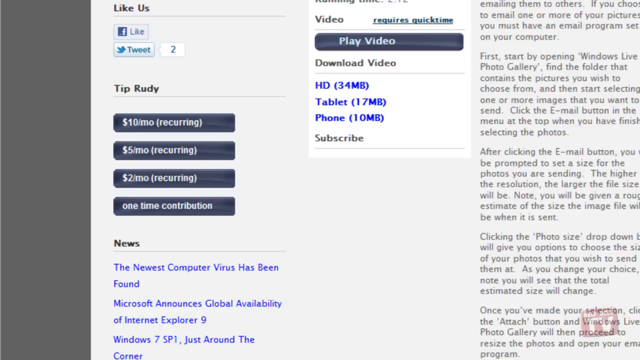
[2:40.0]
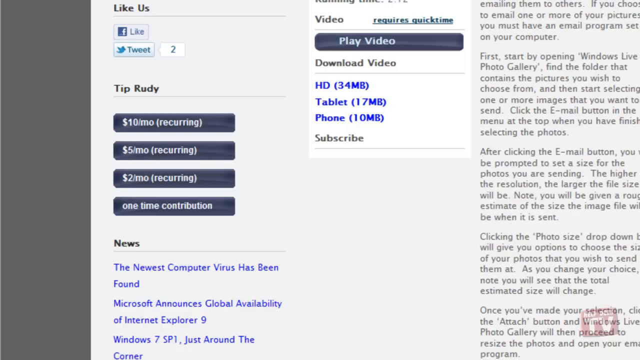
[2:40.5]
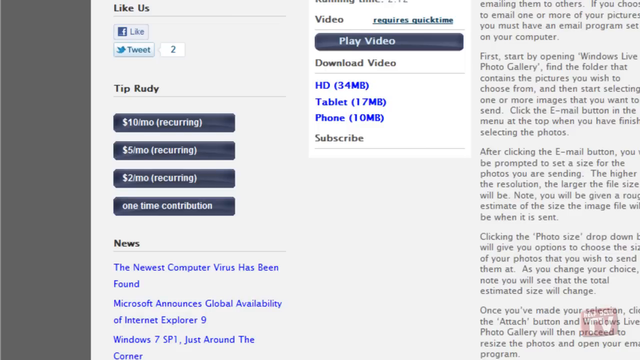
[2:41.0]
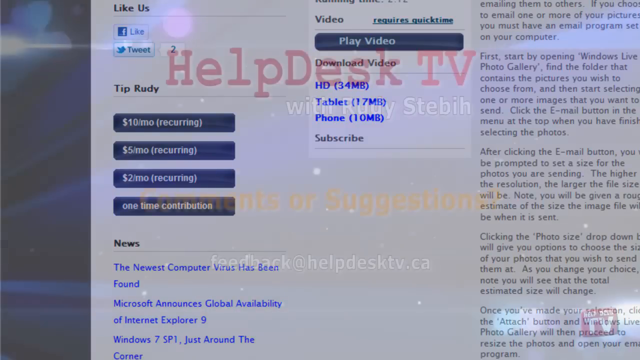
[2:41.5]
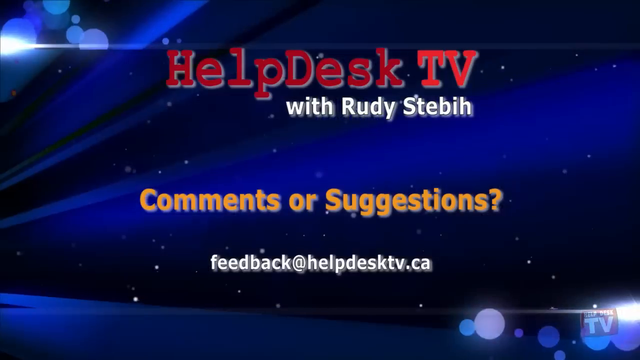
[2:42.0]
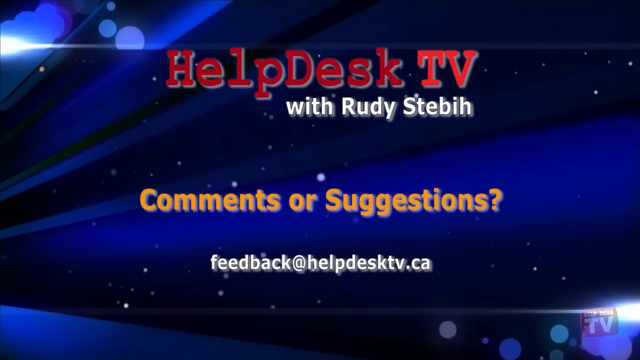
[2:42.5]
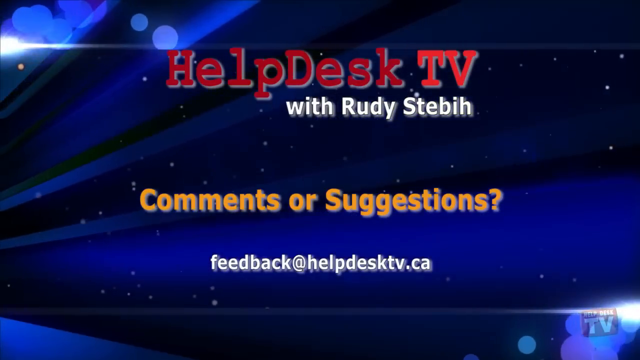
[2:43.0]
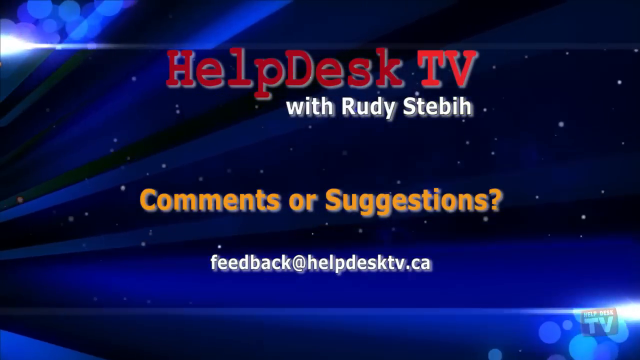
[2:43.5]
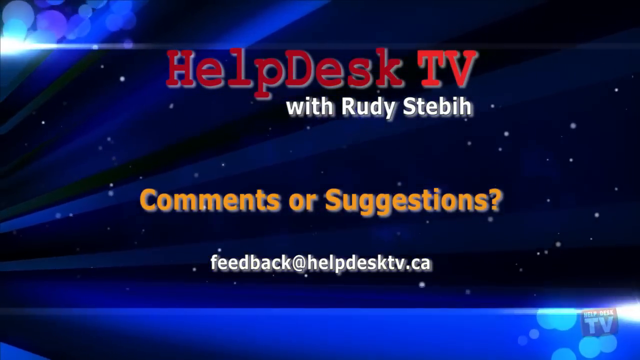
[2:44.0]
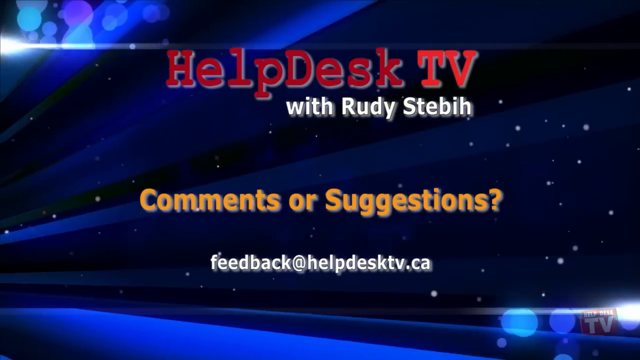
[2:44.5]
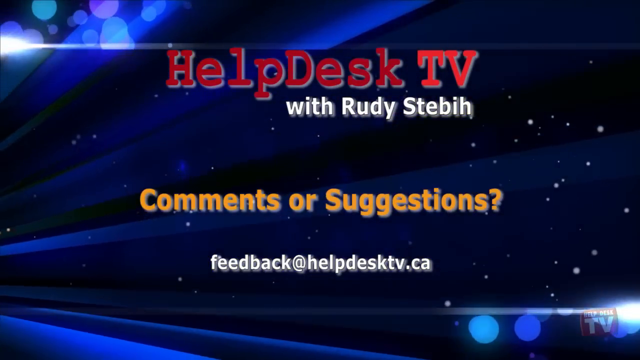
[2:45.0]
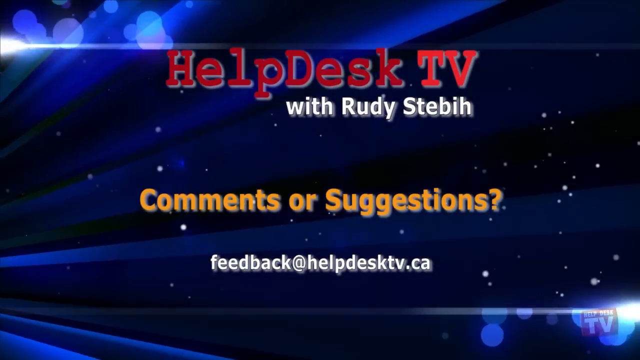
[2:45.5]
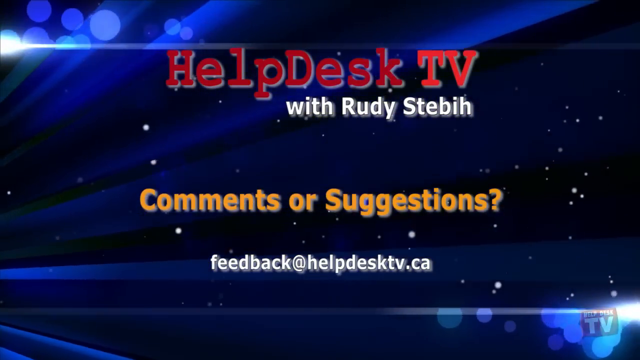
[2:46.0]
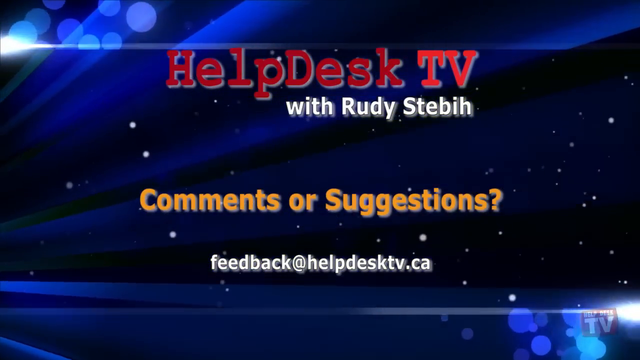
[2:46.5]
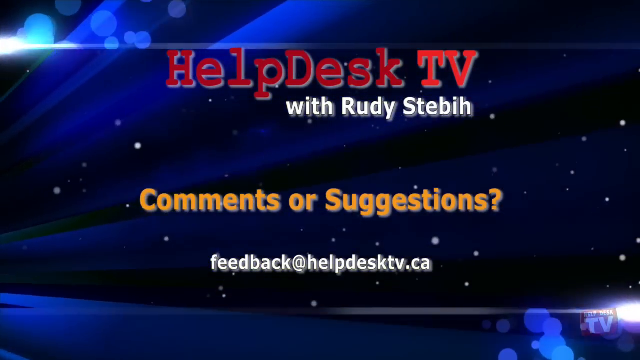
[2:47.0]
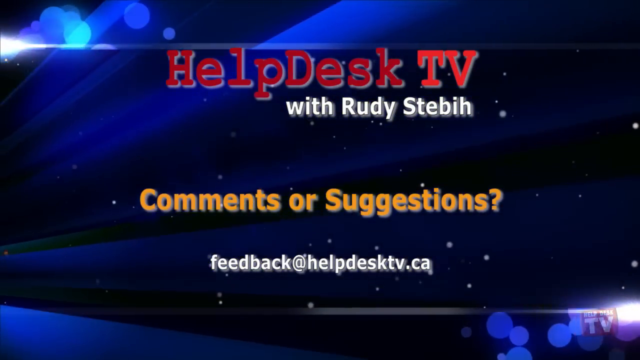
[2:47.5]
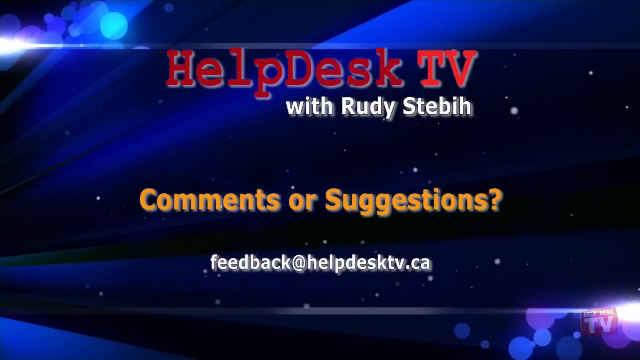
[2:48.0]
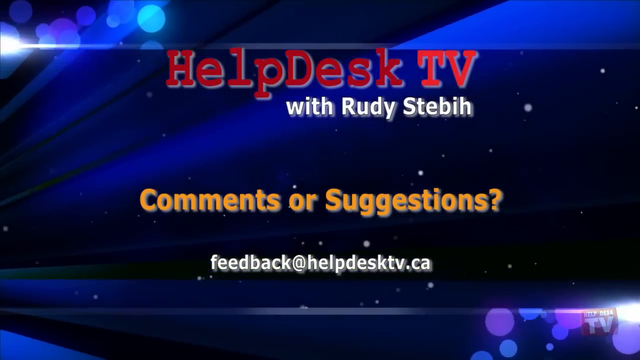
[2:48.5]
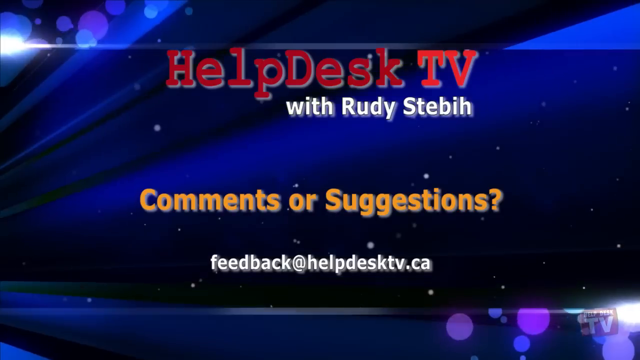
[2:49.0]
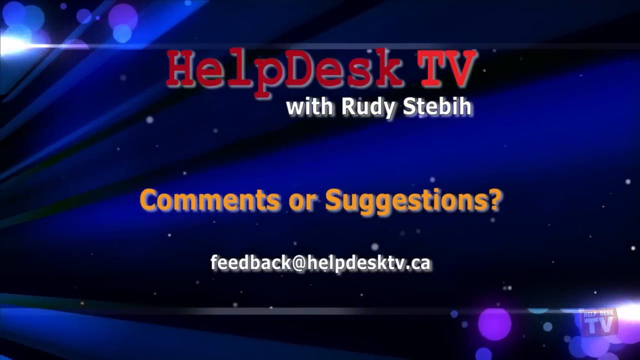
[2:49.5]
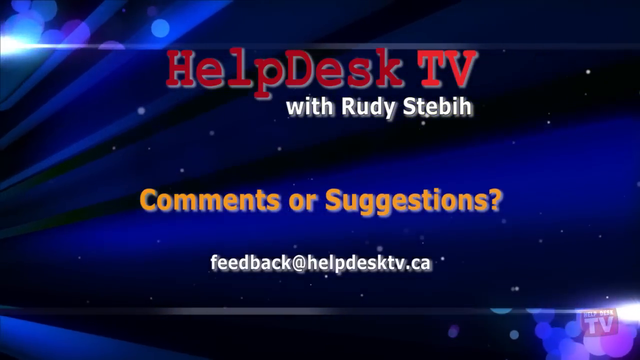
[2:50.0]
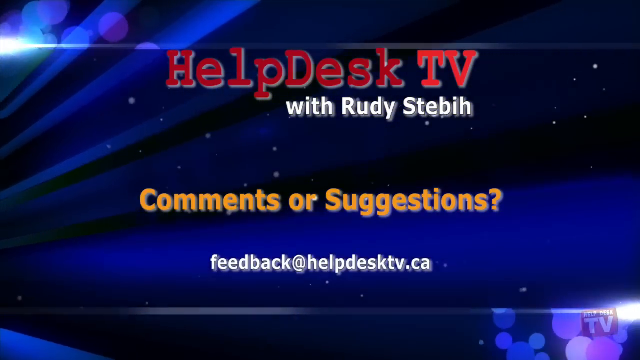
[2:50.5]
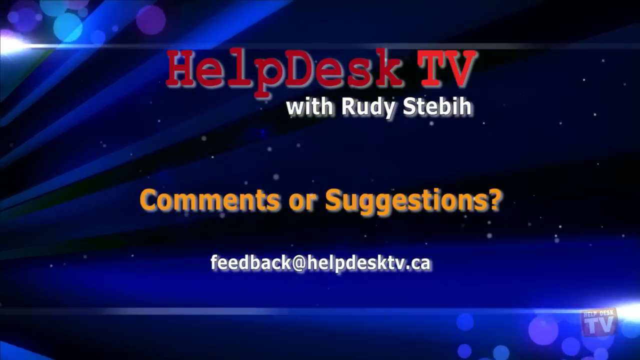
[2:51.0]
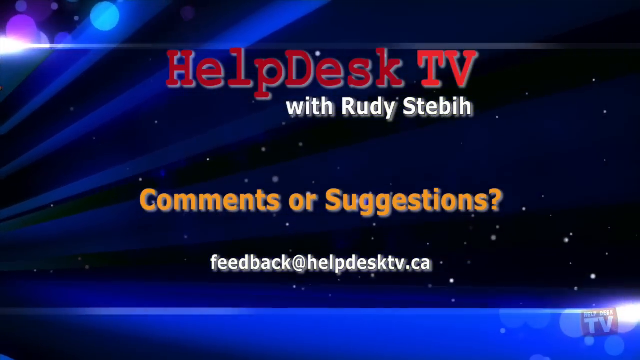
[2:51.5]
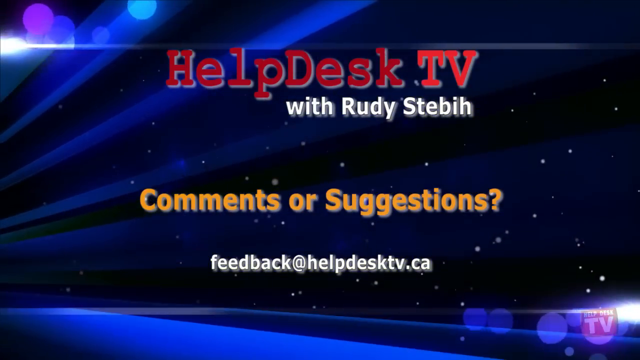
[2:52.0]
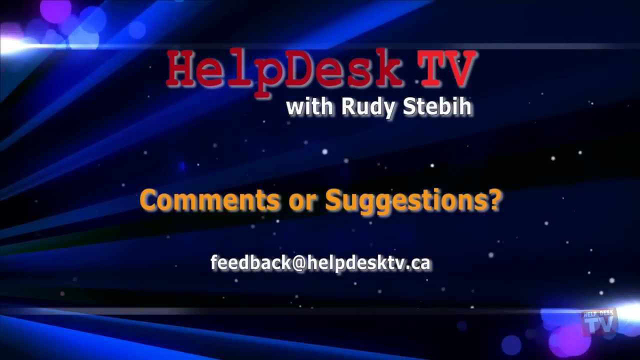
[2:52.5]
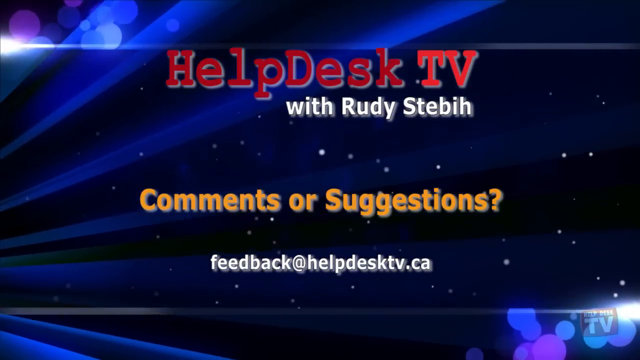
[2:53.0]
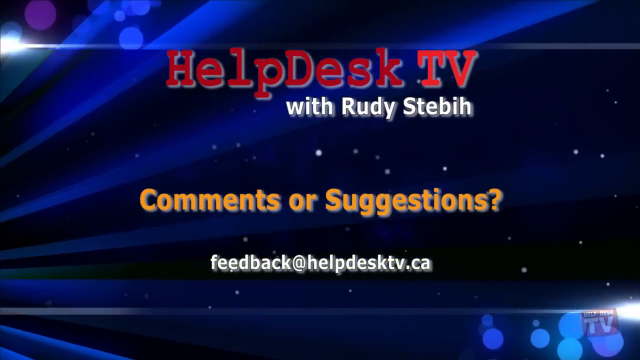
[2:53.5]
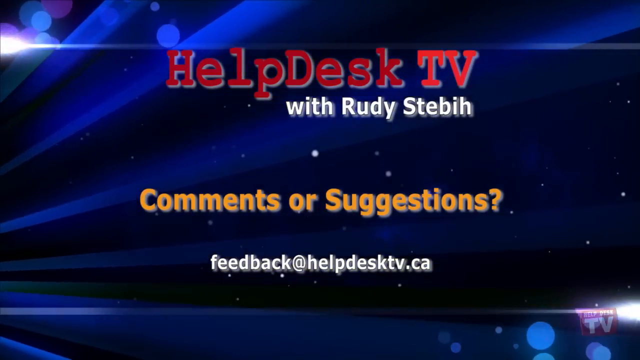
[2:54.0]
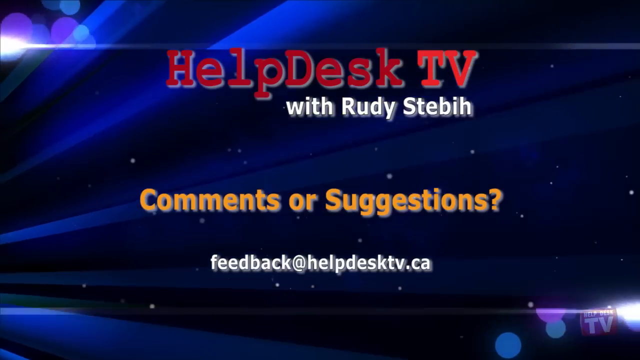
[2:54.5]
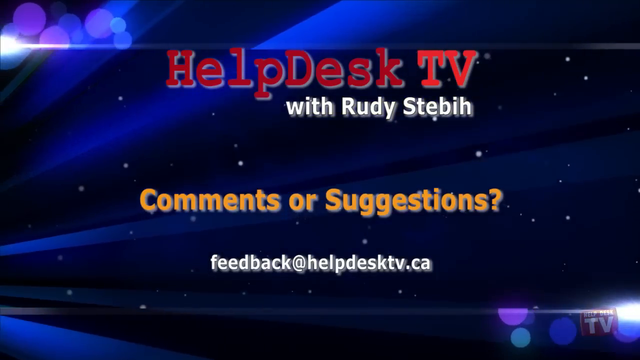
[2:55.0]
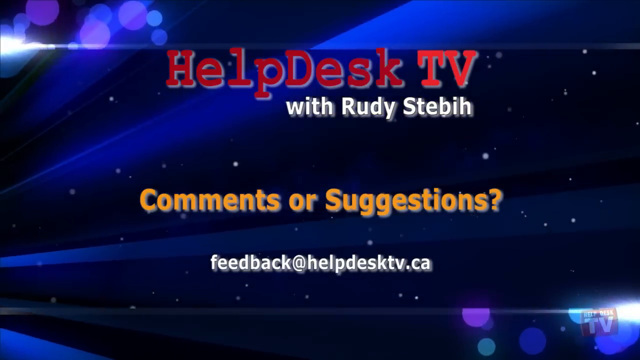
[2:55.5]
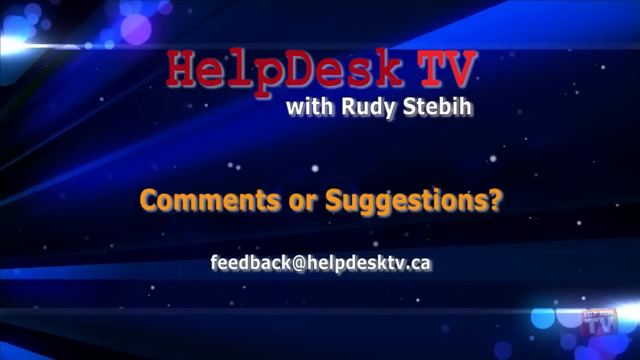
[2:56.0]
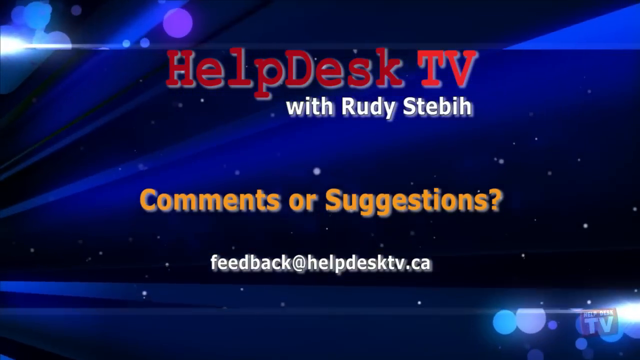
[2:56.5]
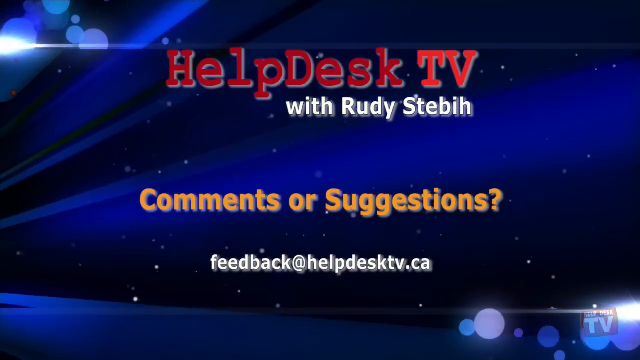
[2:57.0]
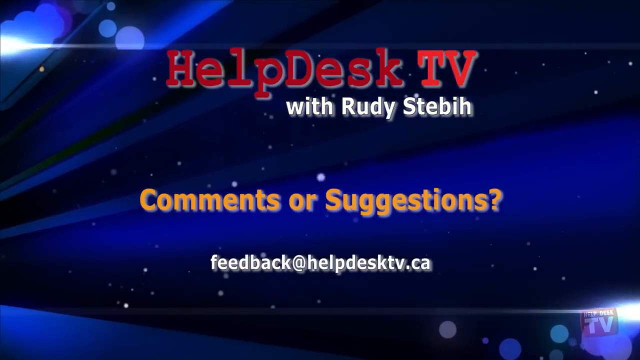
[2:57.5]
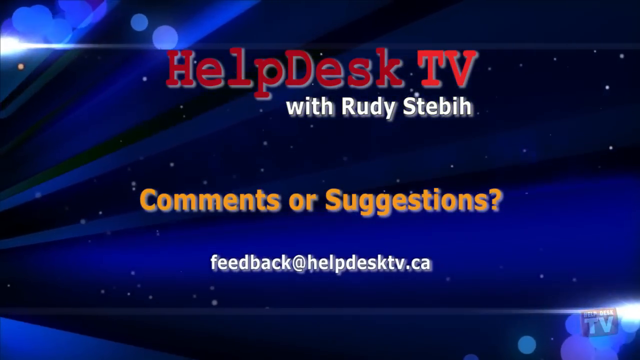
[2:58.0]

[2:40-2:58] The web page stays up for just a second and then goes away, returning to the starting page: a dark blue background with a white spot in the upper left corner that looks like it's on fire, with flames coming off it. Light blue circles float around the screen, there are stars in the background, and some light waves are moving. At the top of the screen is "help desk TV" in red, the largest font on the page, and beneath it in white is "with Rudy Steibih". Below that, in orange, is "comments or suggestions", and beneath that in white is "feedback@helpdesktv.ca". In the bottom right corner is the small translucent logo, a little red square that says "helpdesktv". There are small white and blue circles and a white, kind of flame-like shape in the bottom right-hand corner as well. White circles come in at the top of the screen from the left, and white and blue circles come from the bottom right toward the center of the screen.